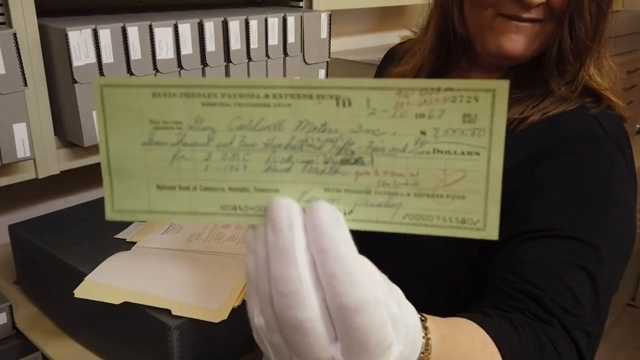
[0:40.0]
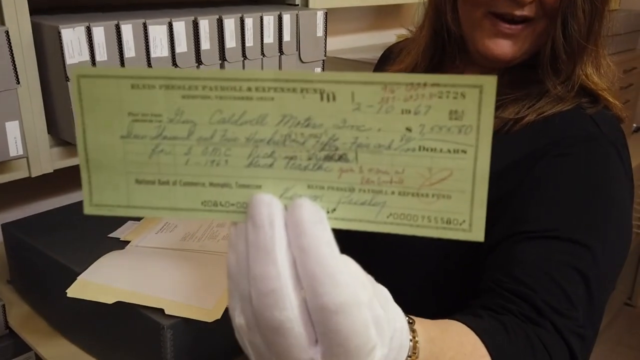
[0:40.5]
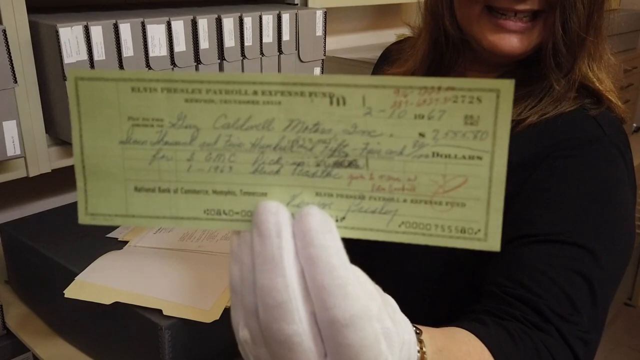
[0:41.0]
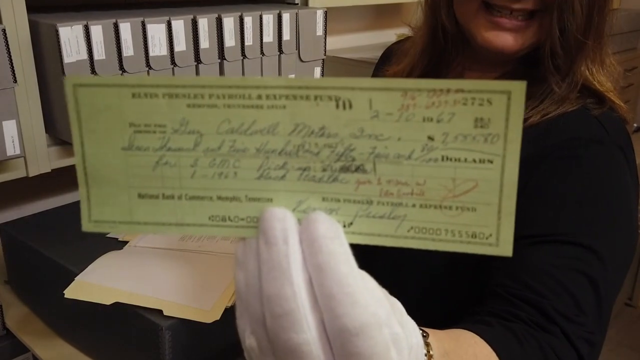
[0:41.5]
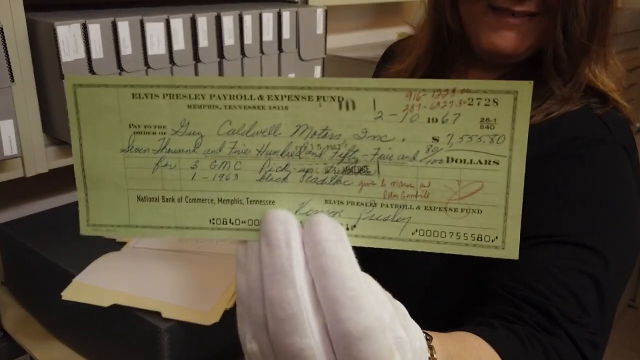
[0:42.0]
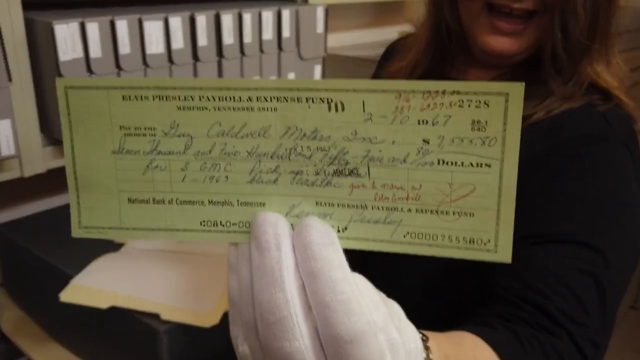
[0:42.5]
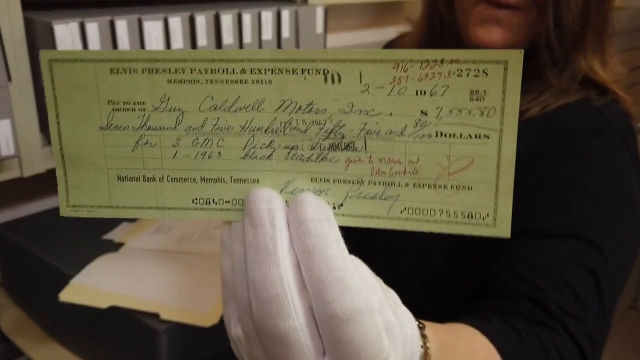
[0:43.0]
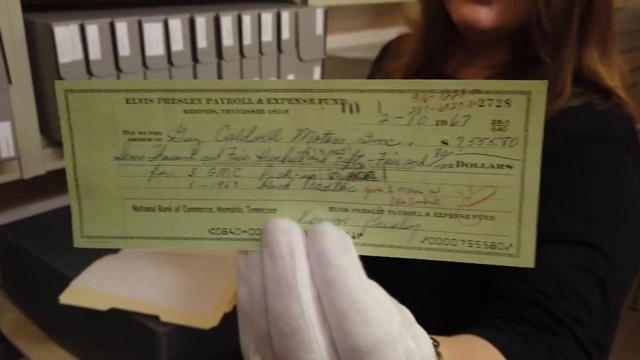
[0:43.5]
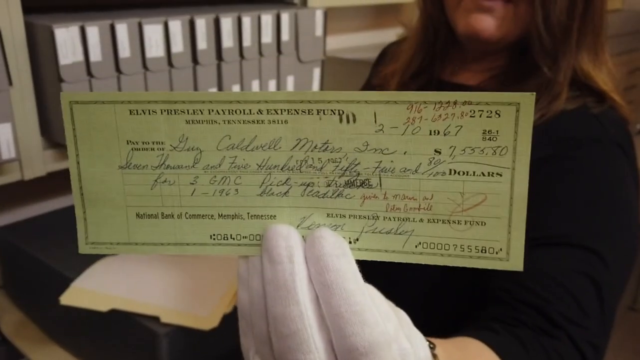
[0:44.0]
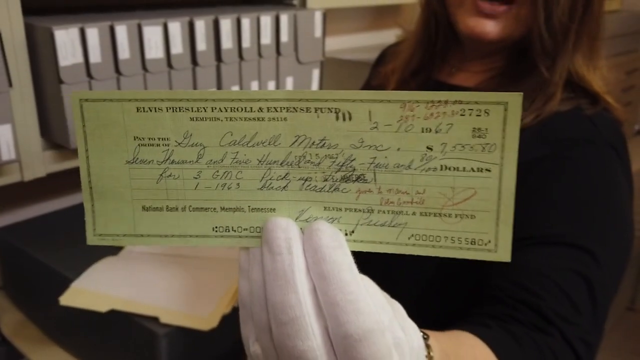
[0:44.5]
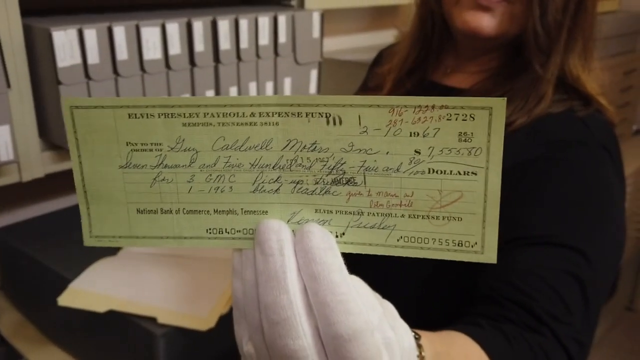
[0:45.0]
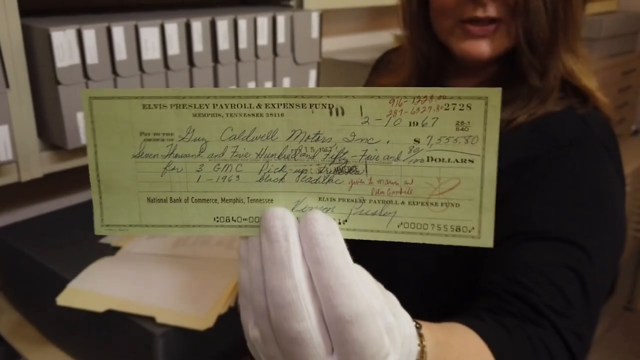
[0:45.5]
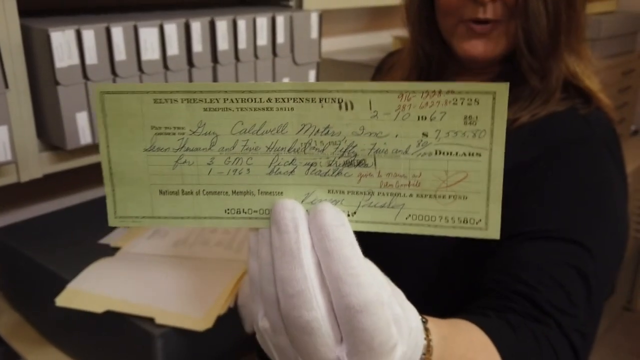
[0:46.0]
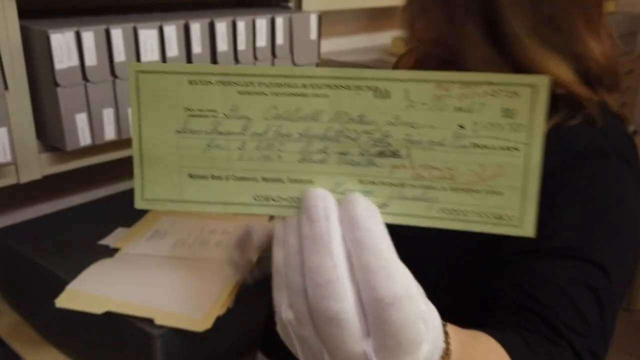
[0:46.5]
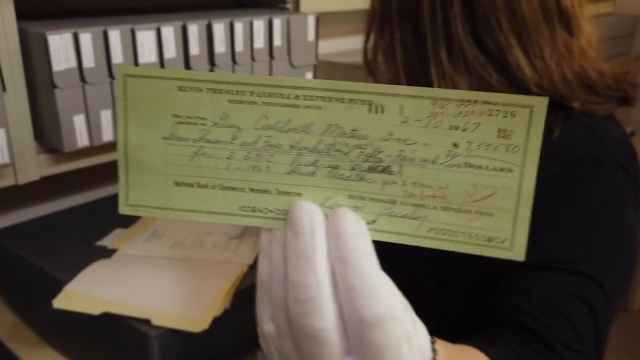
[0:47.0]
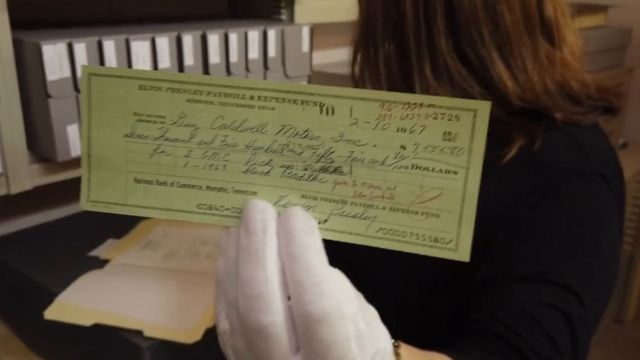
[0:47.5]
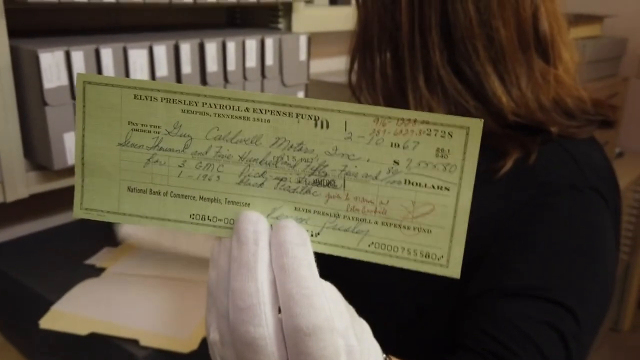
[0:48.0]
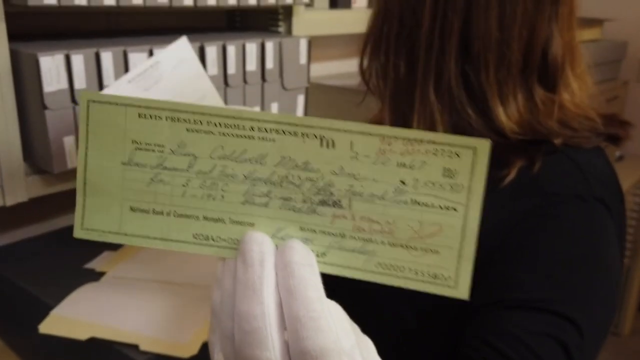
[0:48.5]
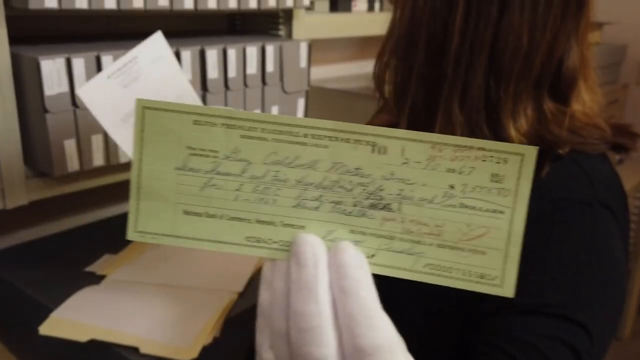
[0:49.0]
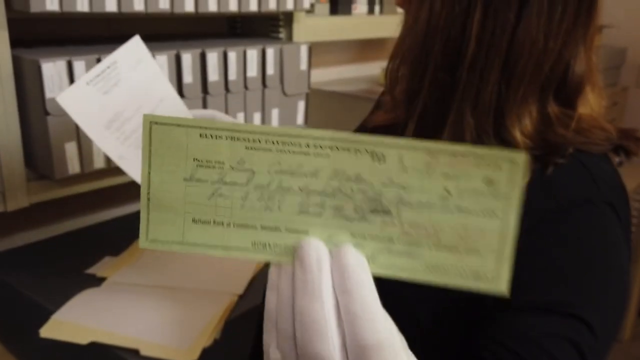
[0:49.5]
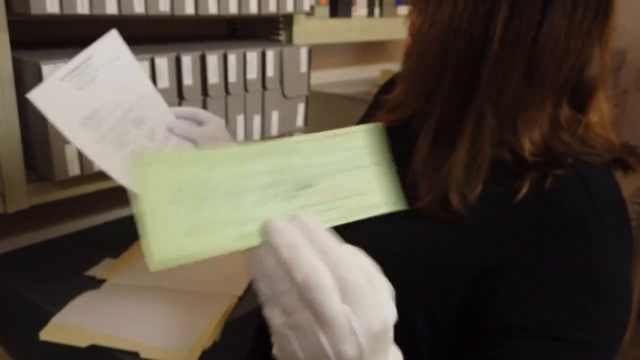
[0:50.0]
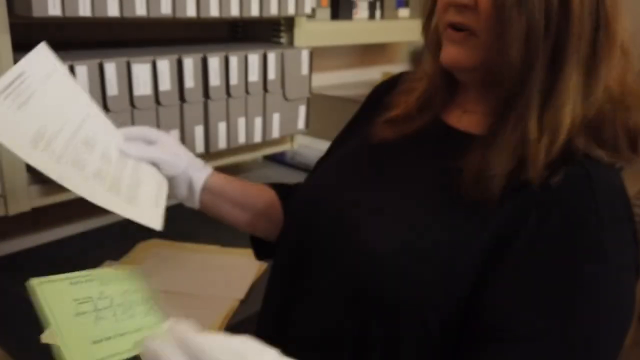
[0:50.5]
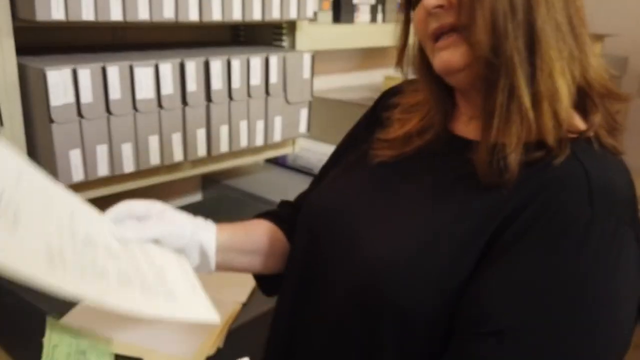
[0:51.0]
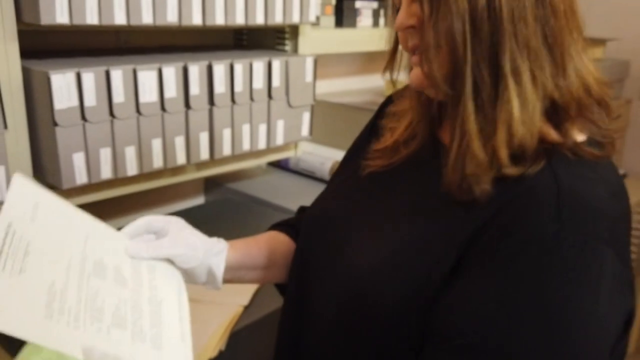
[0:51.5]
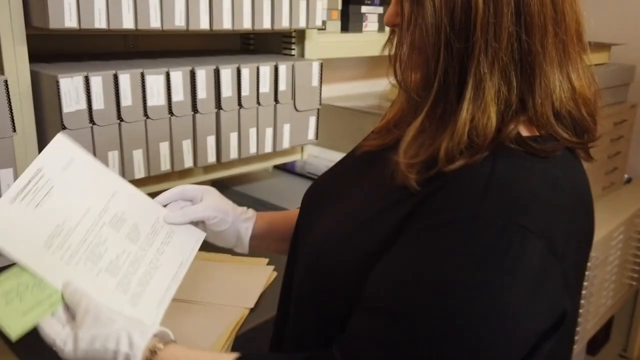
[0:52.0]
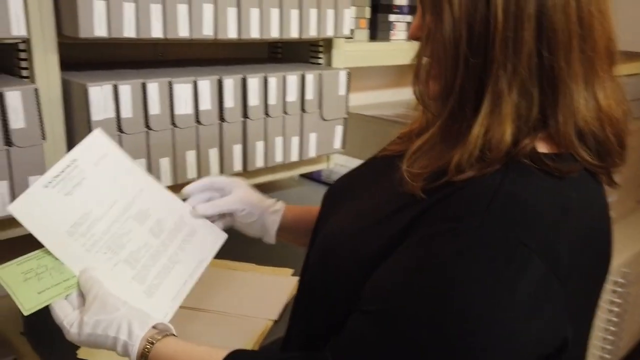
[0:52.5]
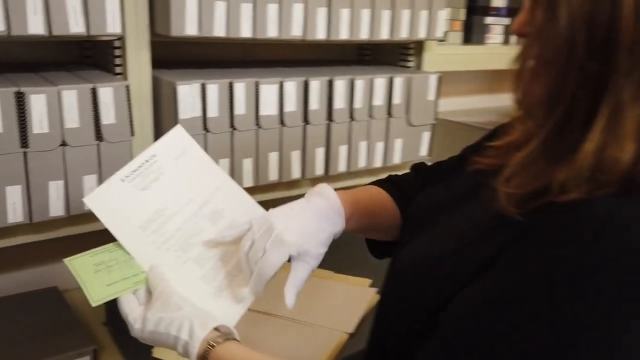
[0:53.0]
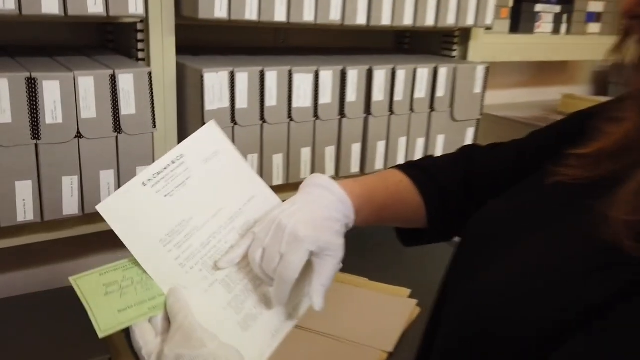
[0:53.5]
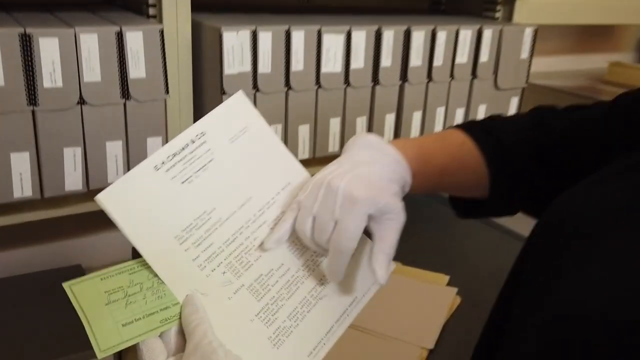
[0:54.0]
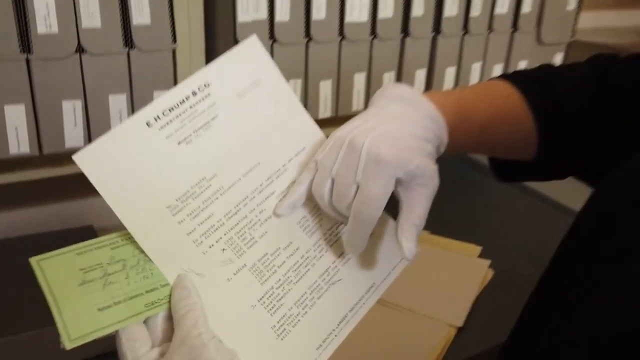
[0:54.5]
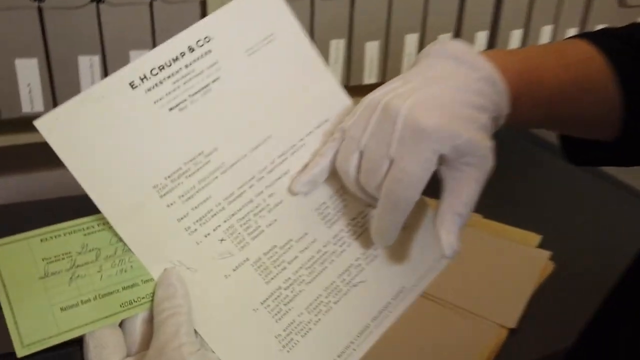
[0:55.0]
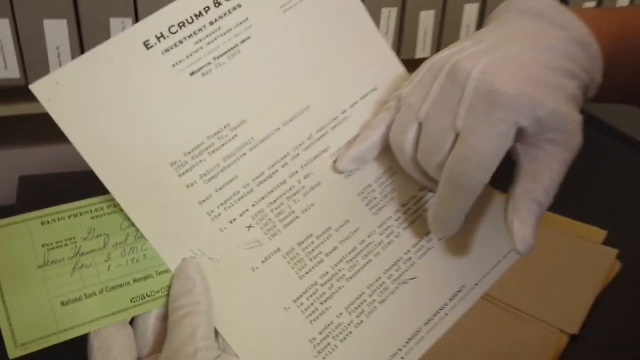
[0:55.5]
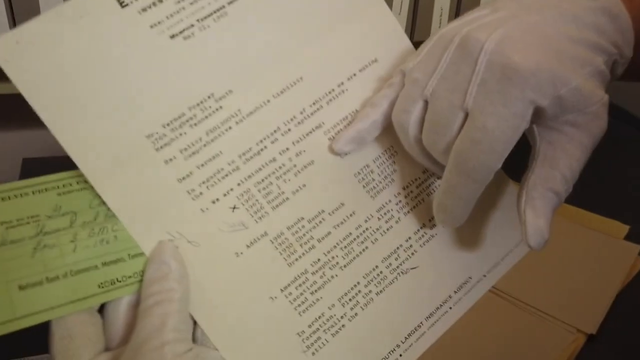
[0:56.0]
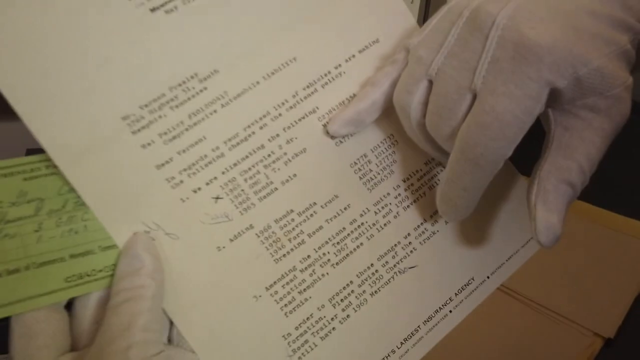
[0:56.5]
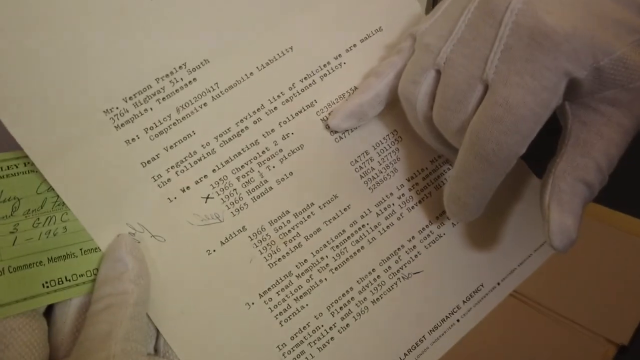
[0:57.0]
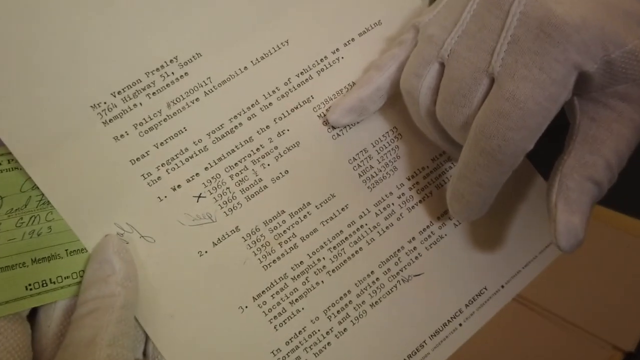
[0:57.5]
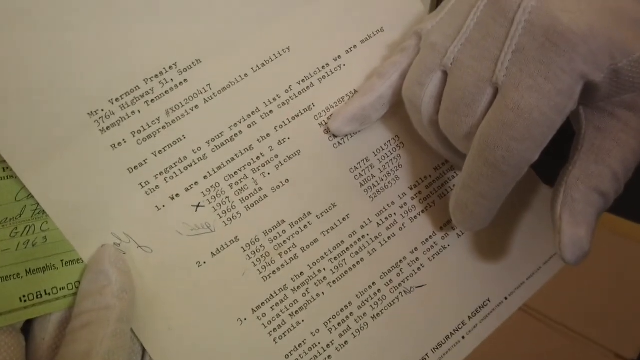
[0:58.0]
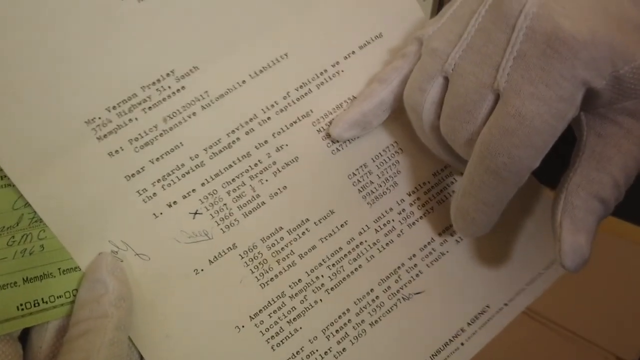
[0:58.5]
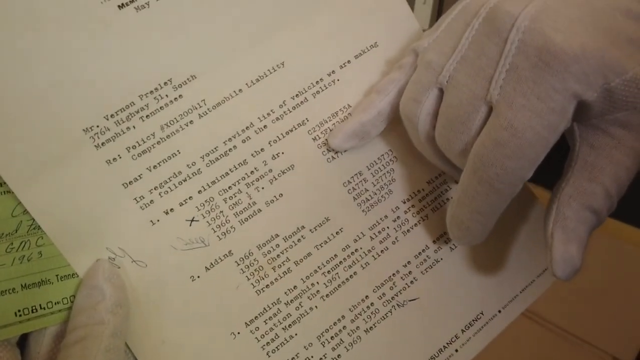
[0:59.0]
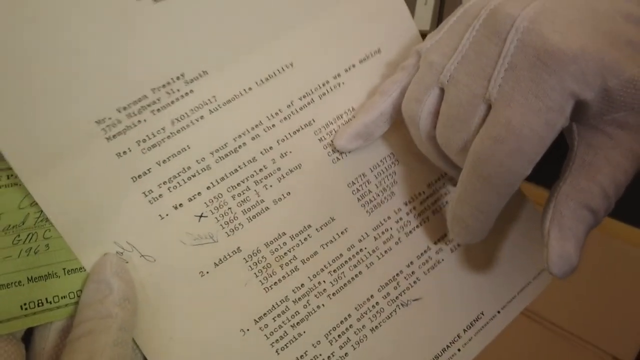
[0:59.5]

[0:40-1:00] A close-up shows the check, which looks to be either yellow or a very light green. The amount is hard to make out, but there are several zeros and it appears to be for possibly seven thousand dollars or more, made out to someone apparently named Gary. Holding the check up to the camera, the woman speaks, then looks into the folder and pulls out a white piece of paper, looking at it. She puts the check in her left hand along with the white paper, which is in front of the check, and sort of points to a specific area of the paper. The paper has black typing that is too small to read.